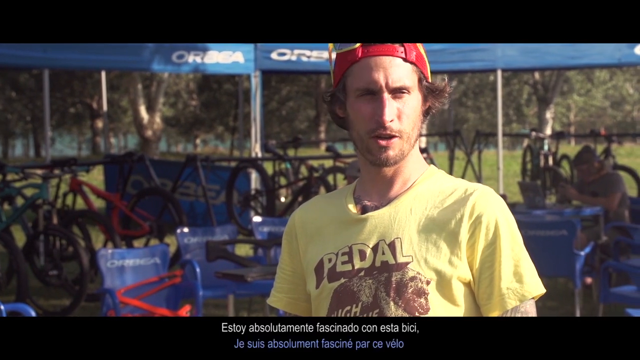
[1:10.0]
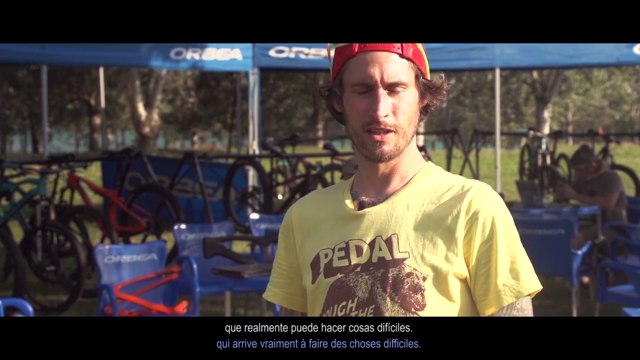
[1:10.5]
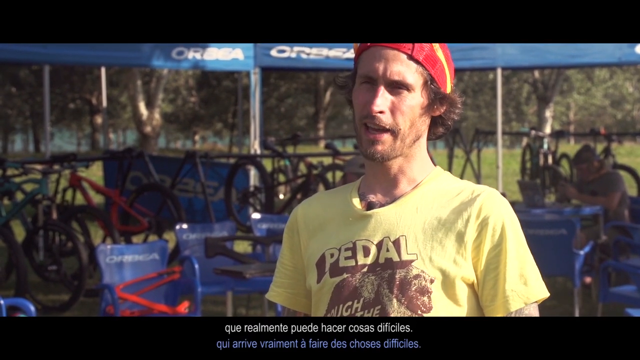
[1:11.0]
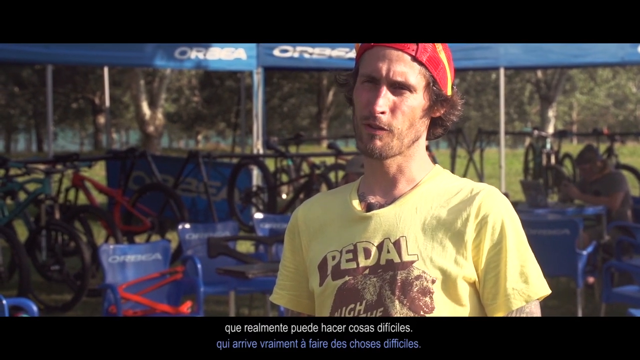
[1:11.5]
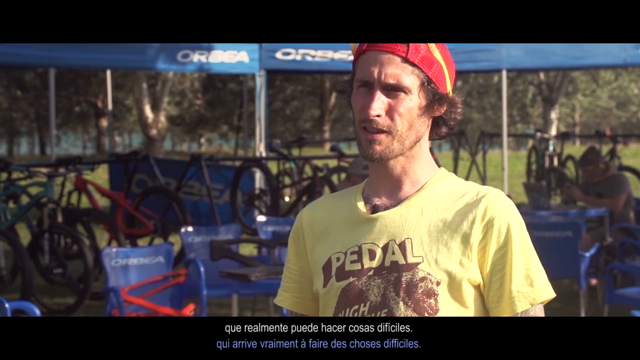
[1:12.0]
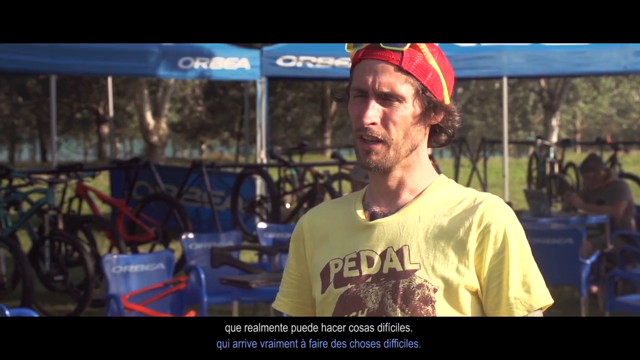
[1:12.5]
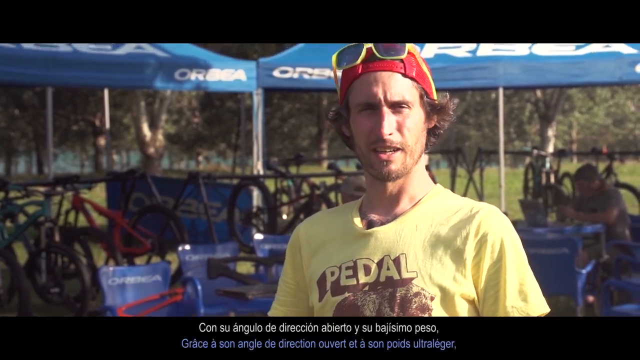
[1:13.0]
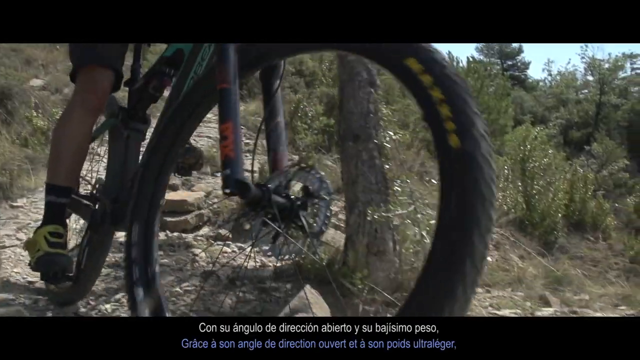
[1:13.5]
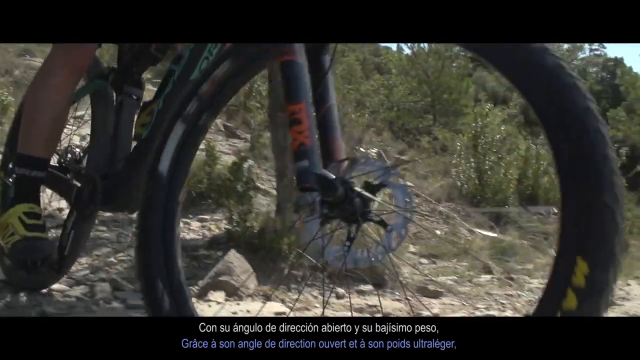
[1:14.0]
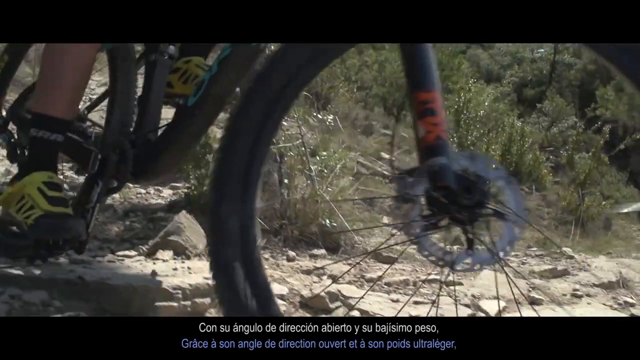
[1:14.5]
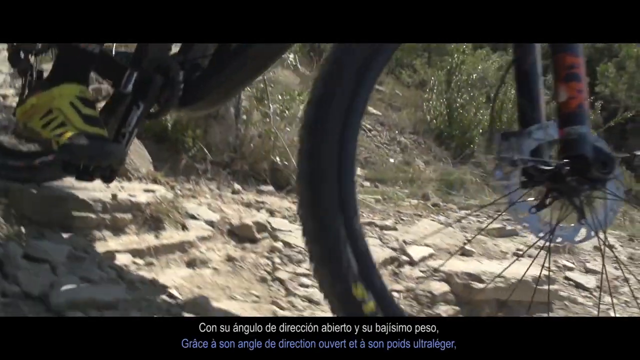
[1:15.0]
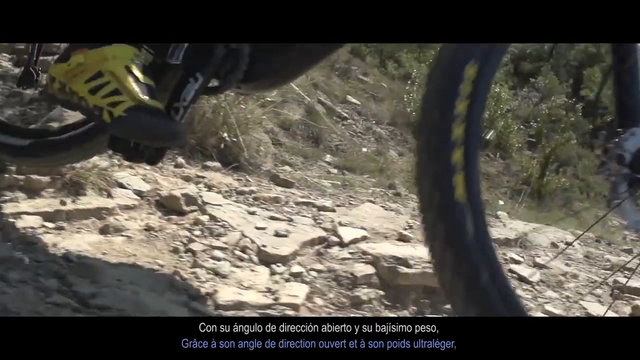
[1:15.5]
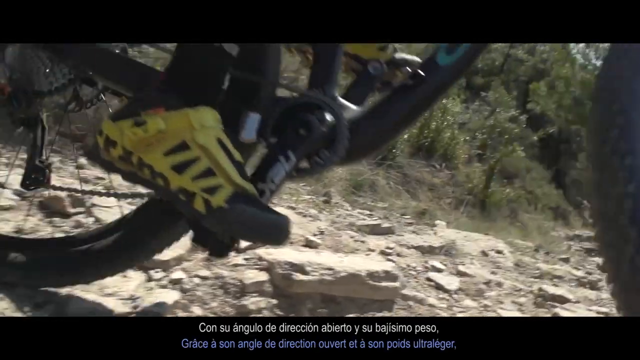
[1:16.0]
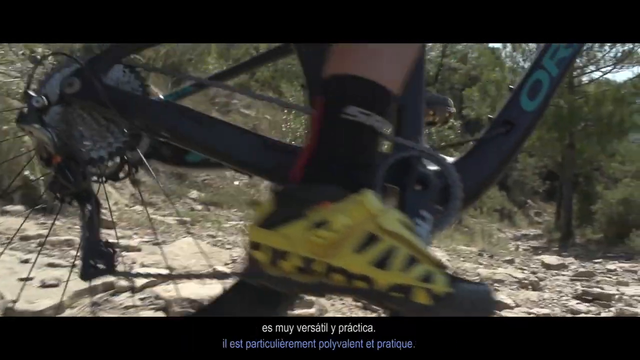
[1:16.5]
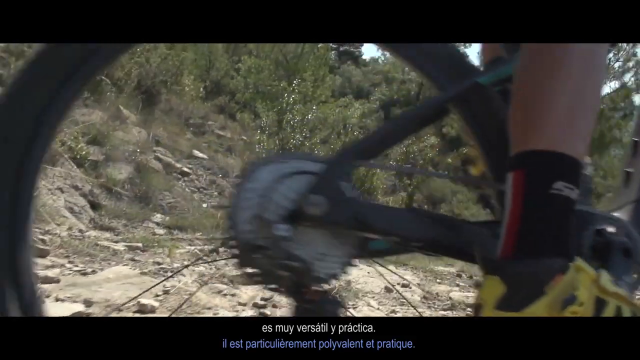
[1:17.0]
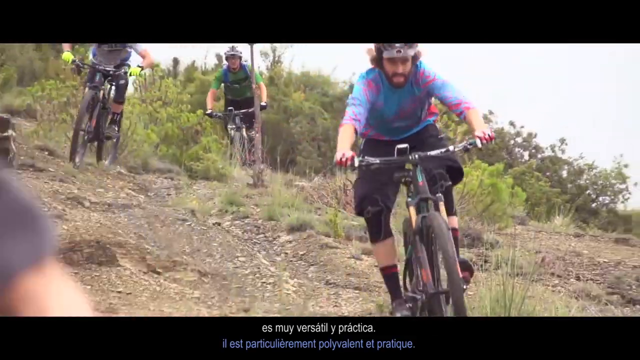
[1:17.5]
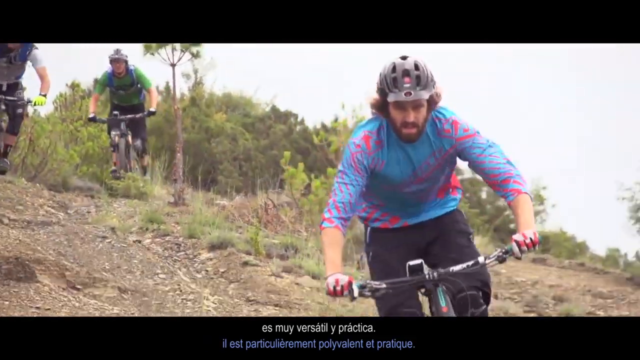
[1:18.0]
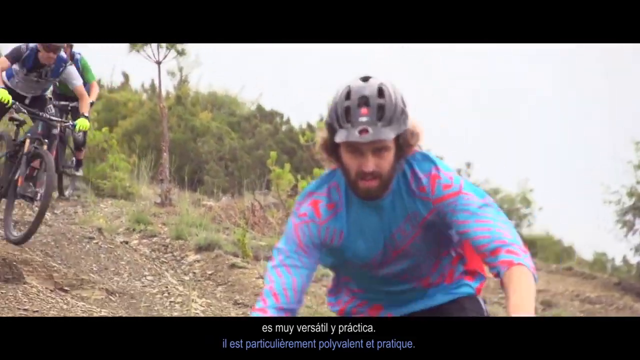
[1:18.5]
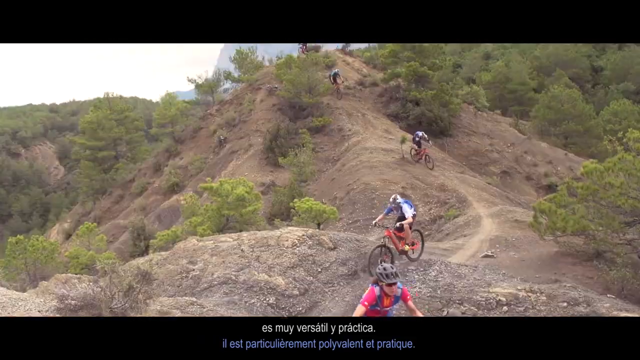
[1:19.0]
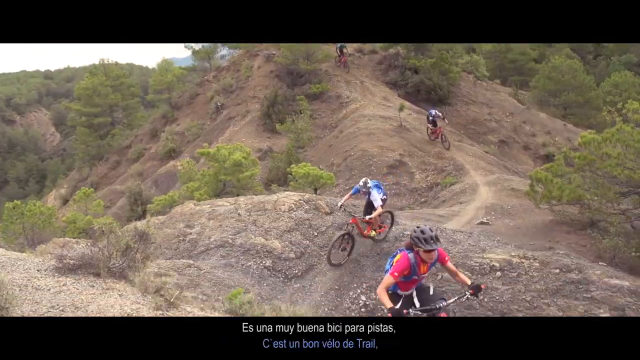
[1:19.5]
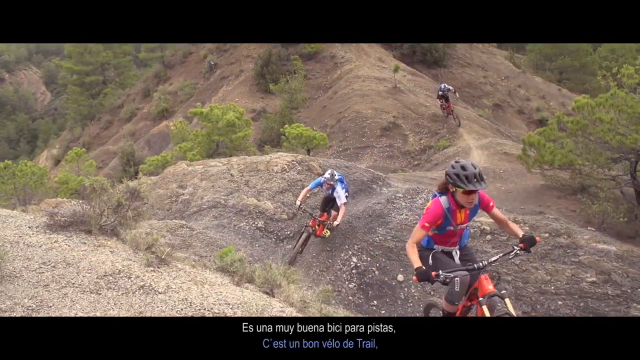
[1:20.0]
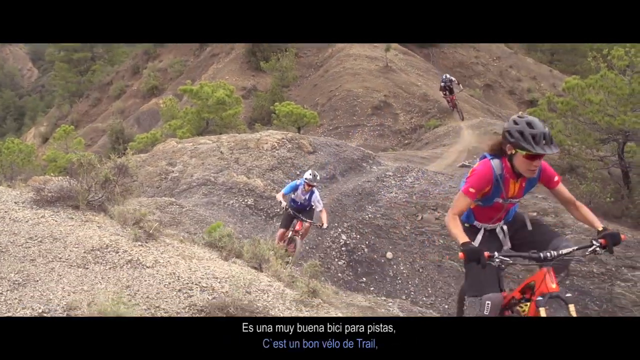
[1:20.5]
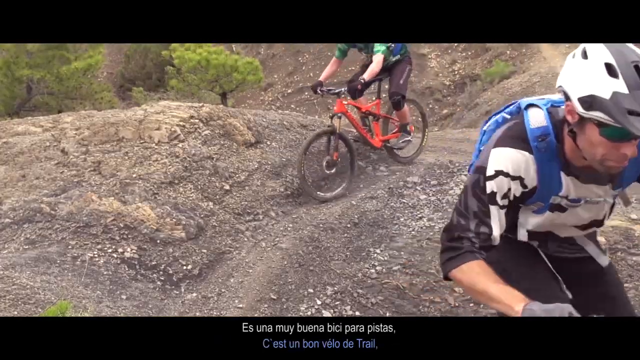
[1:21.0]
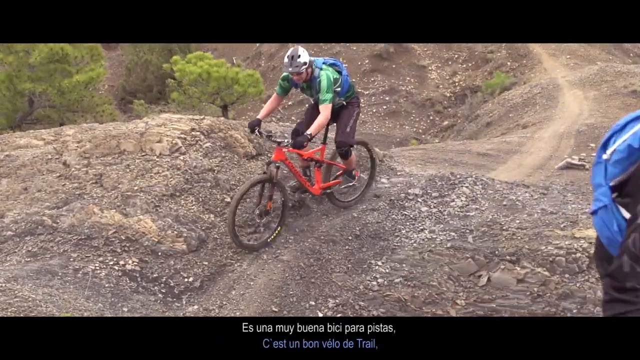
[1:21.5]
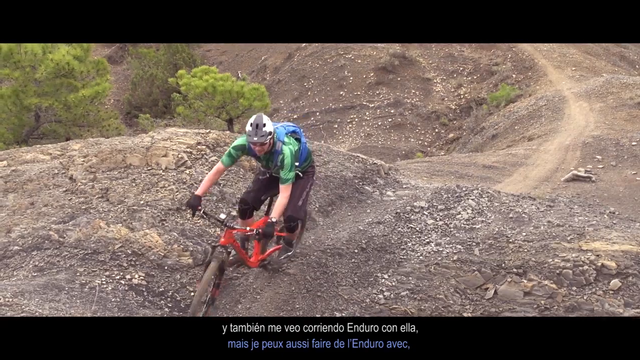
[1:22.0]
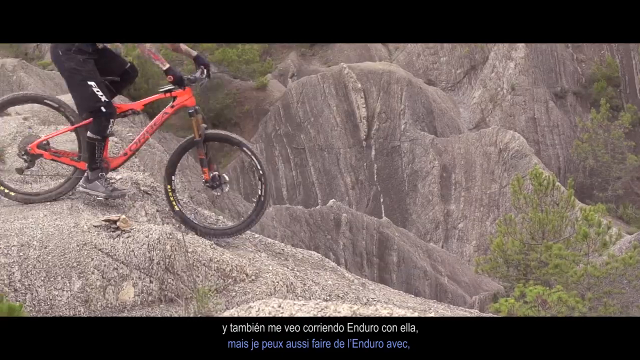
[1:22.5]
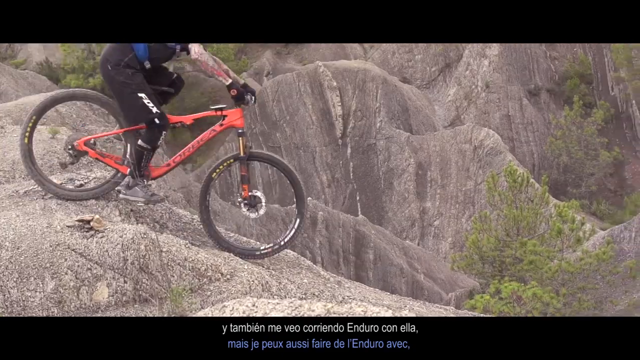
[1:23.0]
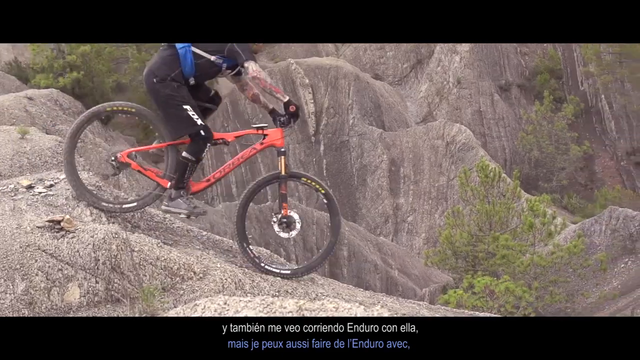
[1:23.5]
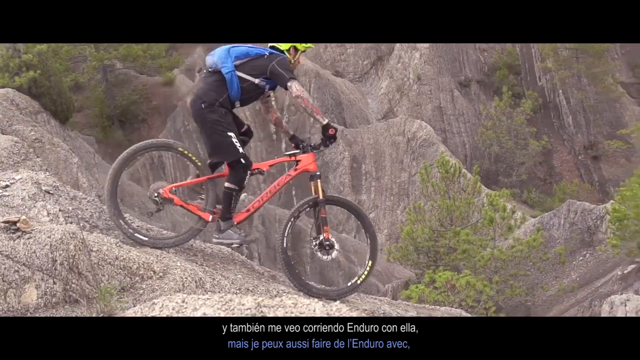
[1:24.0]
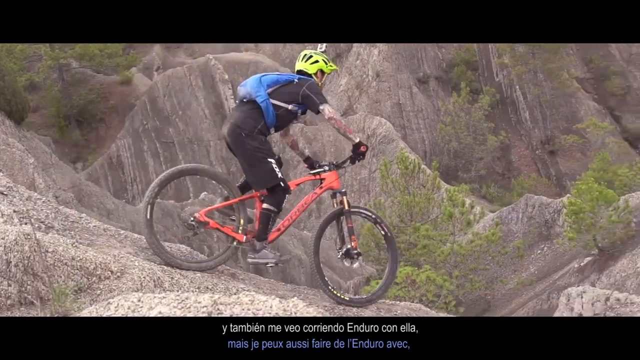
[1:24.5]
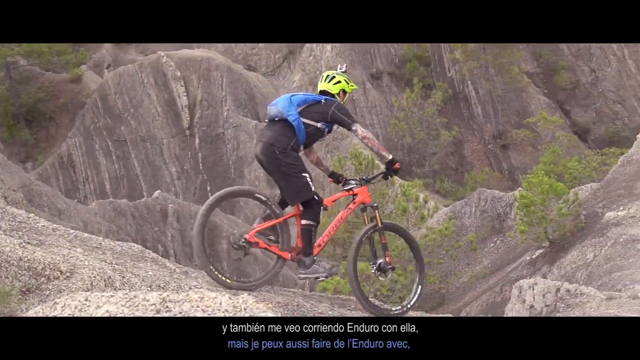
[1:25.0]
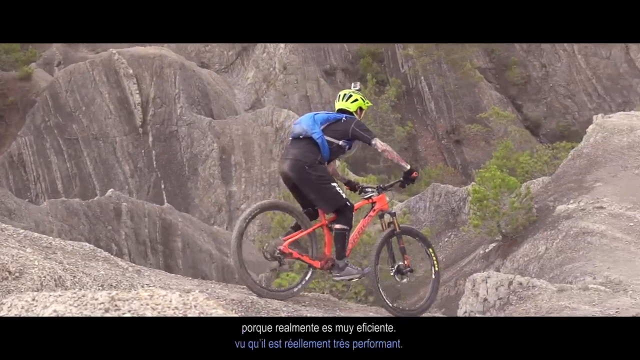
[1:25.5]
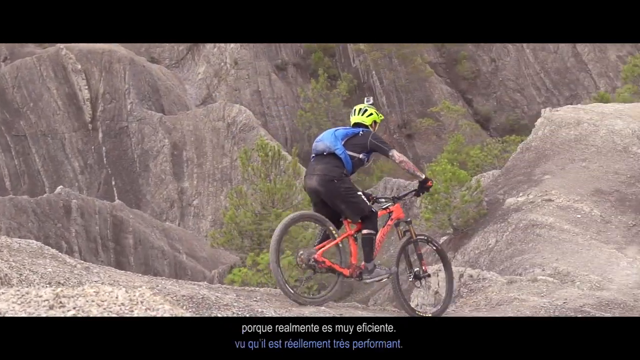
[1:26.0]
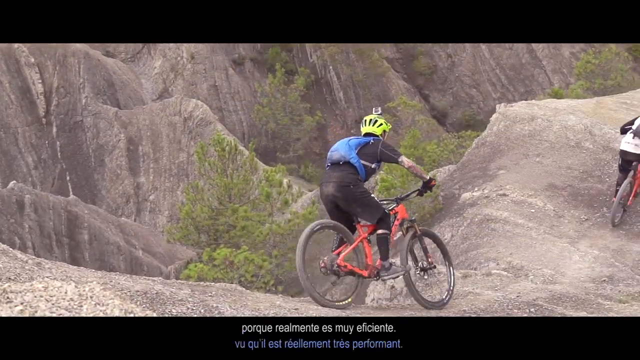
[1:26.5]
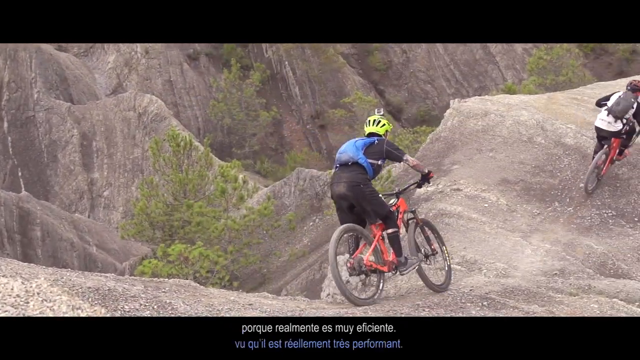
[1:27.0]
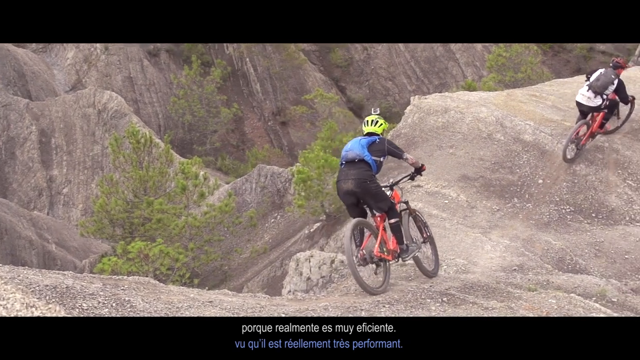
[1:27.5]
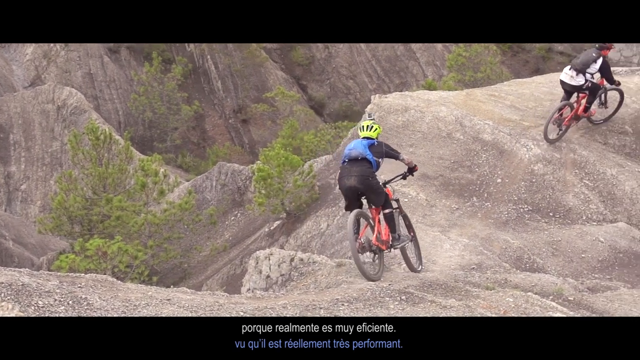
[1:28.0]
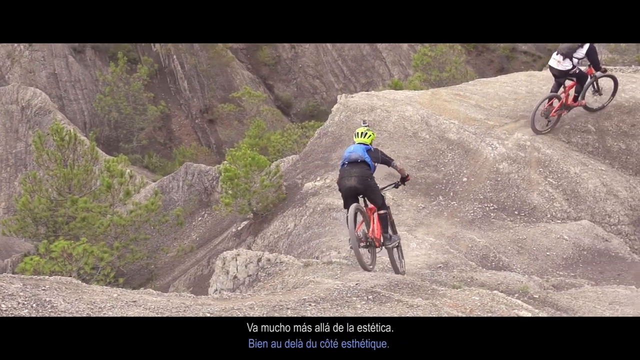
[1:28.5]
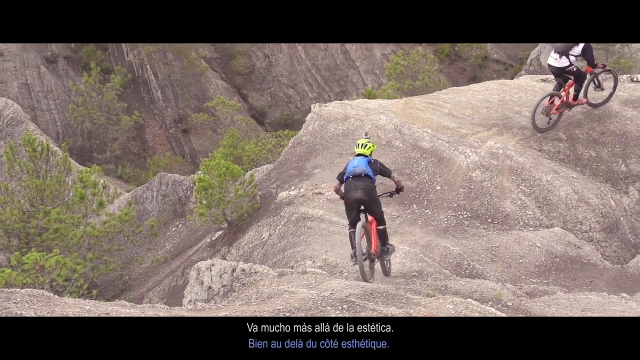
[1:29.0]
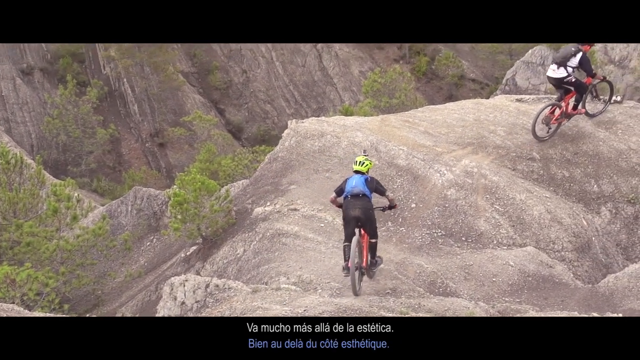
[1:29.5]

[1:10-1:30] The man in the yellow shirt is talking, with sentences in a foreign language at the bottom of the screen. More action shots of riders follow: one bicycle is black with red lettering, and its rider looks like he is wearing yellowish shoes and black socks as he moves along the trail. Another shot shows multiple bikers going rapidly down a very loose, sandy-looking trail with loose rocks everywhere, wearing safety gear. In a new shot, three to four more bikers ride over hill-like dirt mounds, riding in between them. They move fairly quickly and slow down at the turns and at spots where they might fall off the trail.